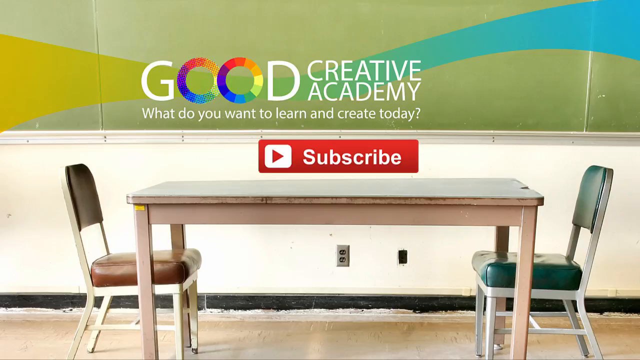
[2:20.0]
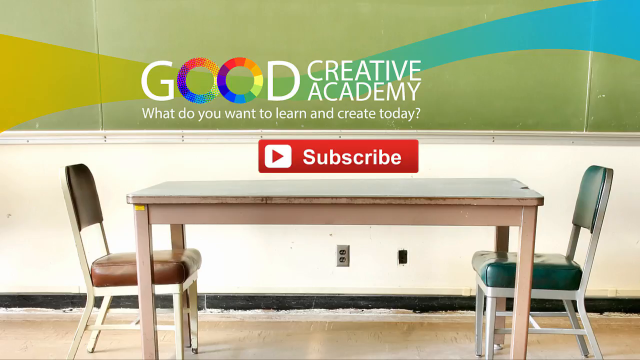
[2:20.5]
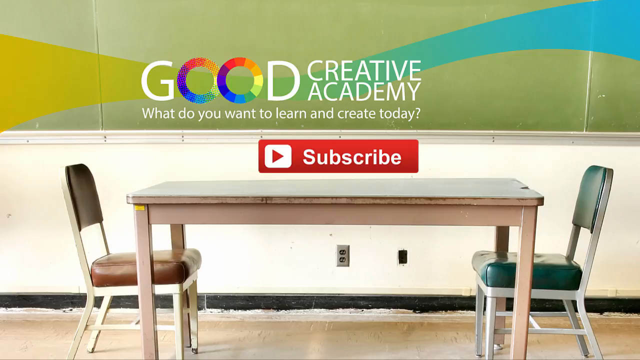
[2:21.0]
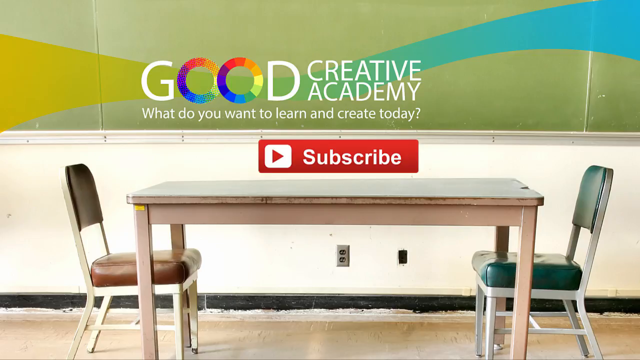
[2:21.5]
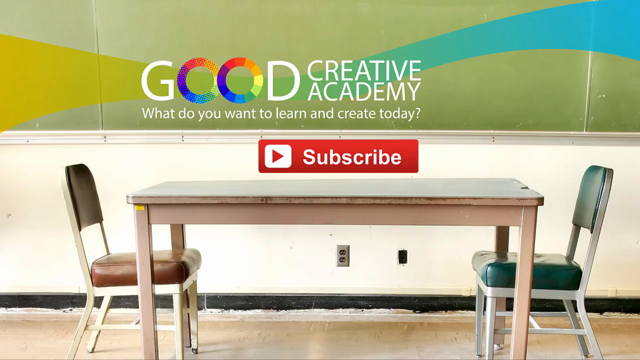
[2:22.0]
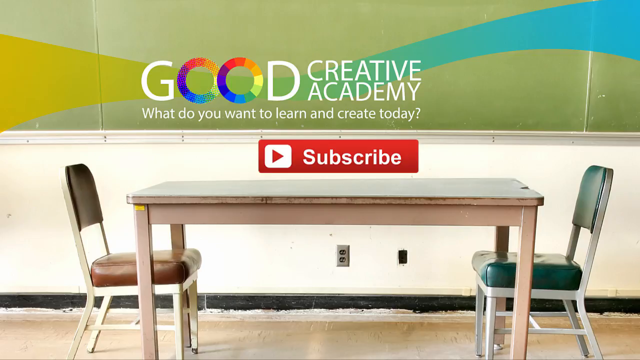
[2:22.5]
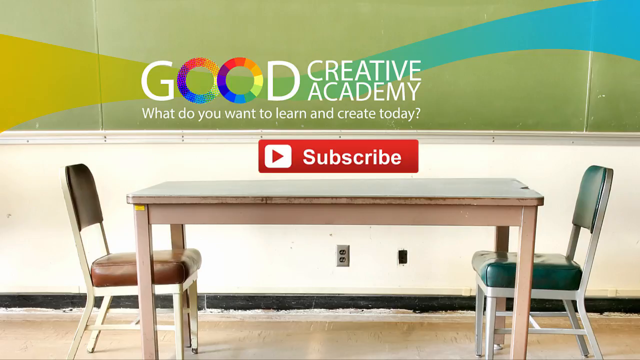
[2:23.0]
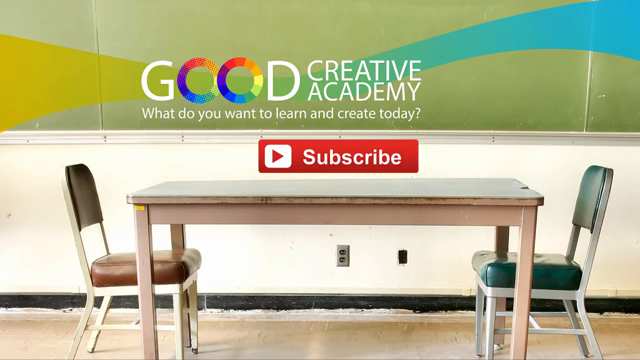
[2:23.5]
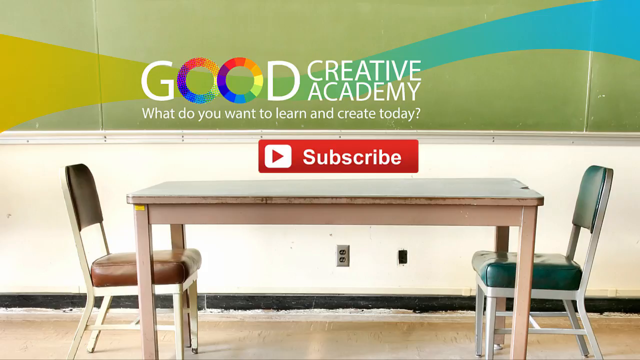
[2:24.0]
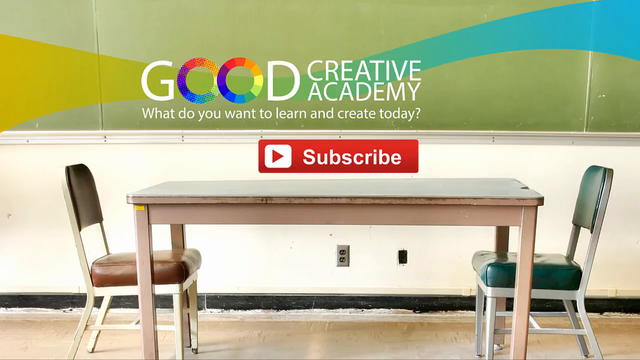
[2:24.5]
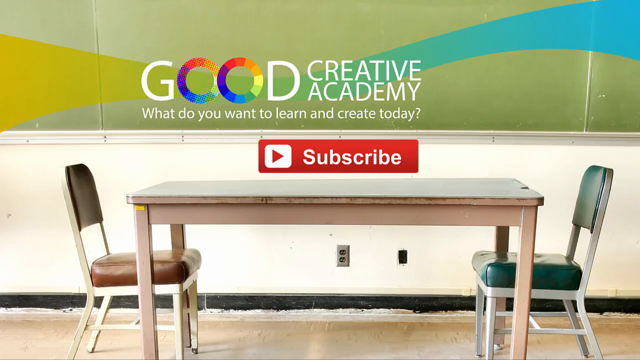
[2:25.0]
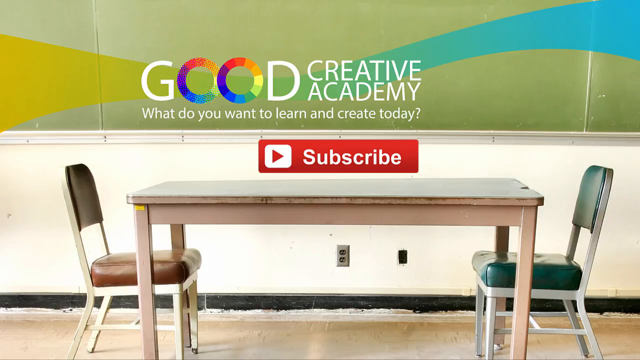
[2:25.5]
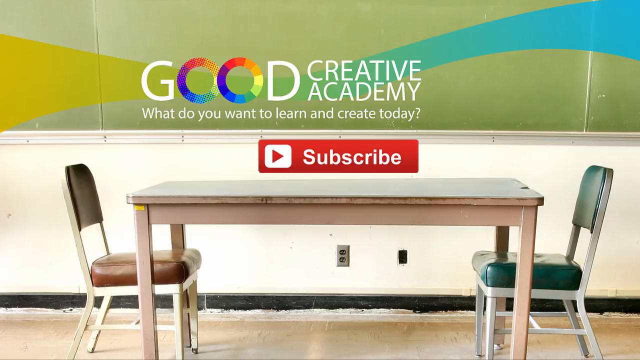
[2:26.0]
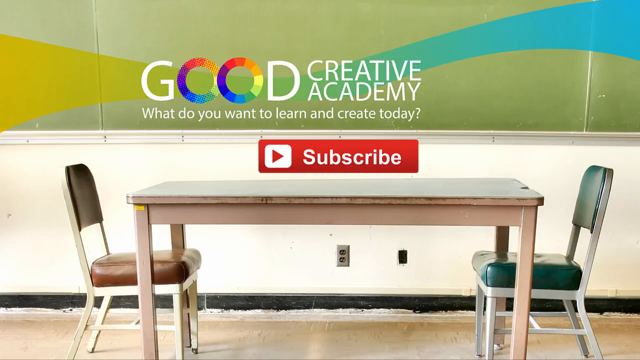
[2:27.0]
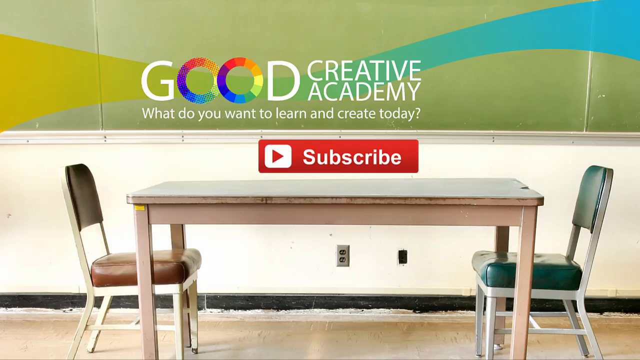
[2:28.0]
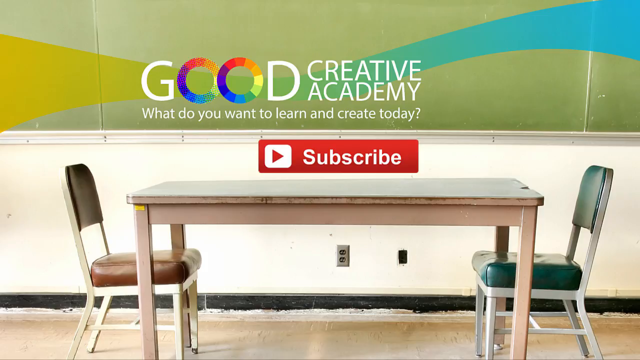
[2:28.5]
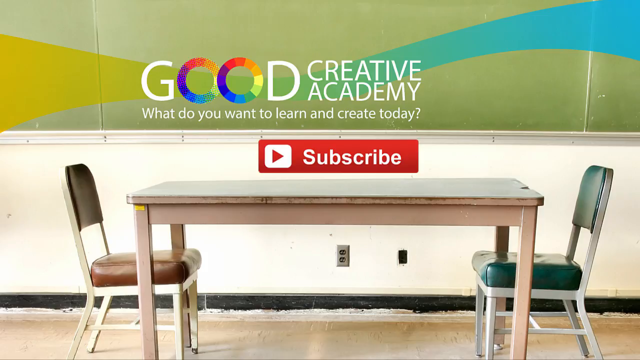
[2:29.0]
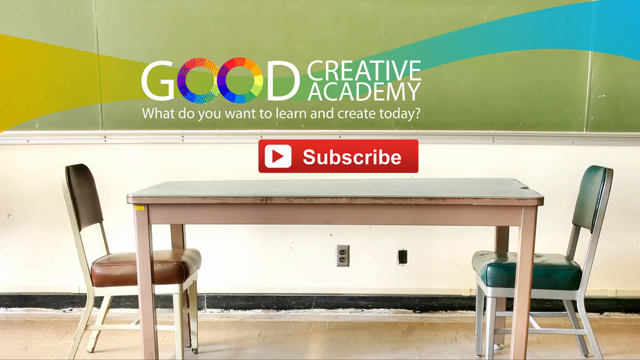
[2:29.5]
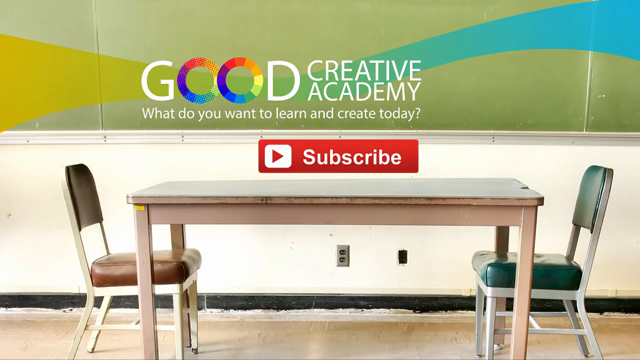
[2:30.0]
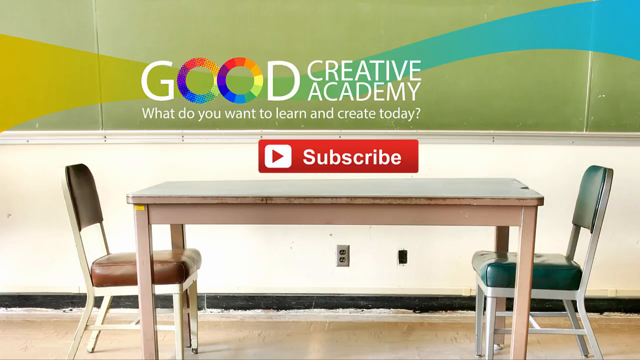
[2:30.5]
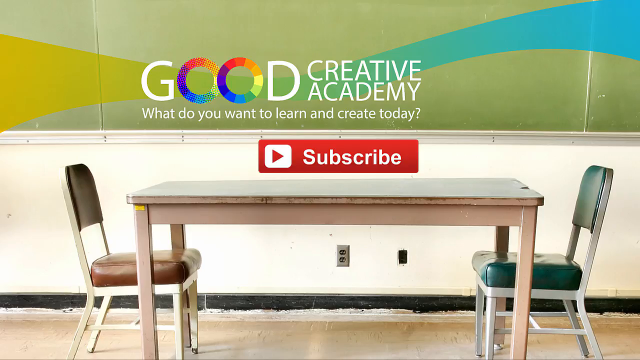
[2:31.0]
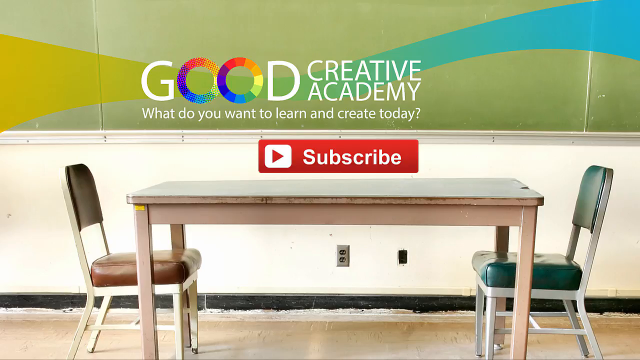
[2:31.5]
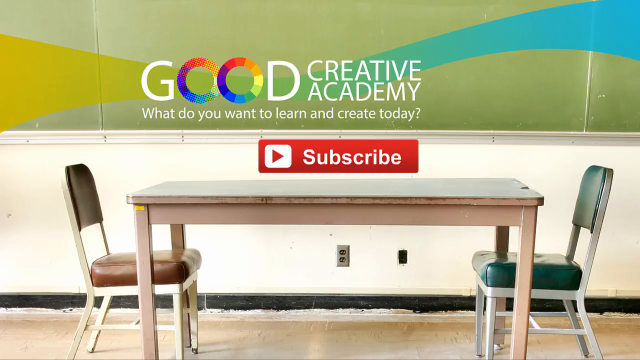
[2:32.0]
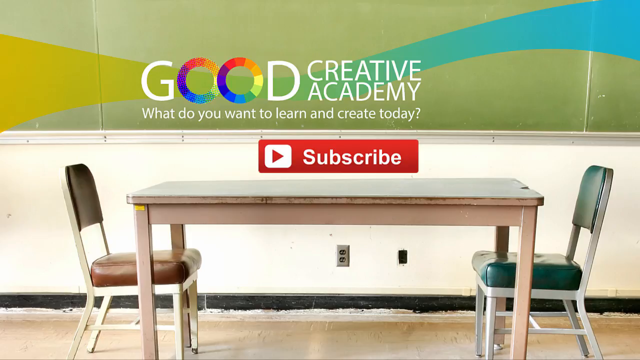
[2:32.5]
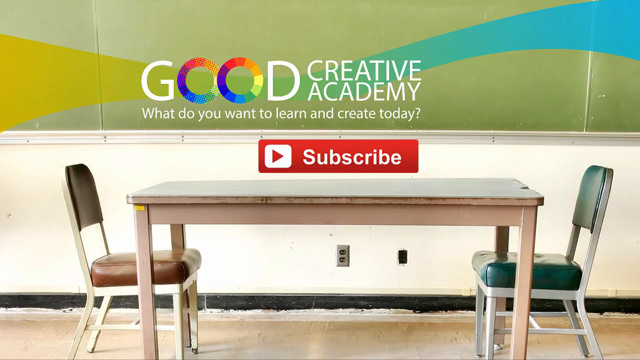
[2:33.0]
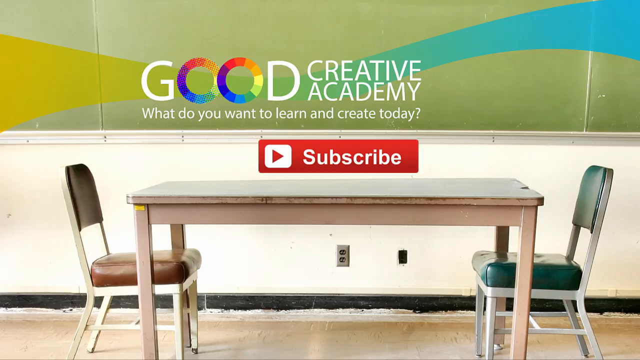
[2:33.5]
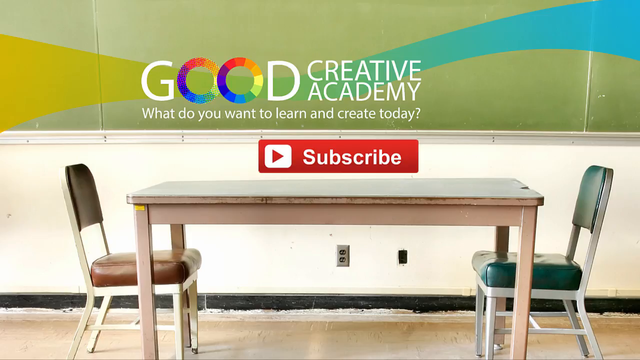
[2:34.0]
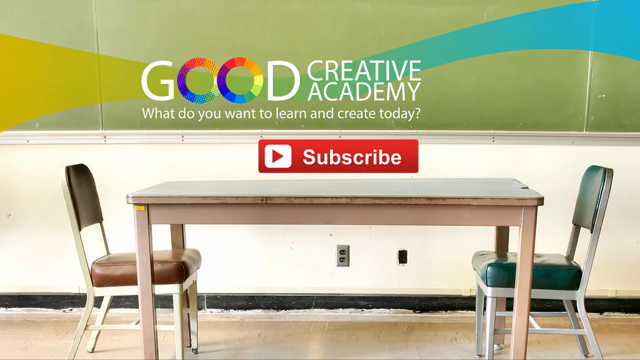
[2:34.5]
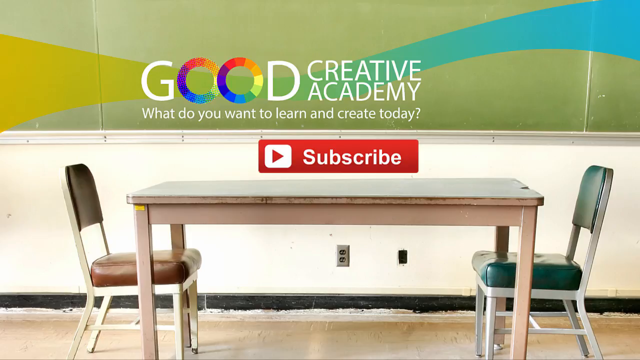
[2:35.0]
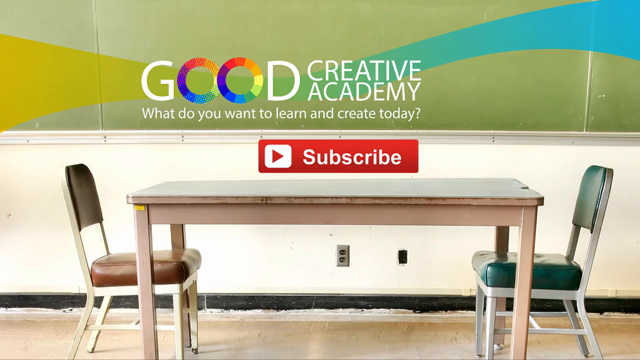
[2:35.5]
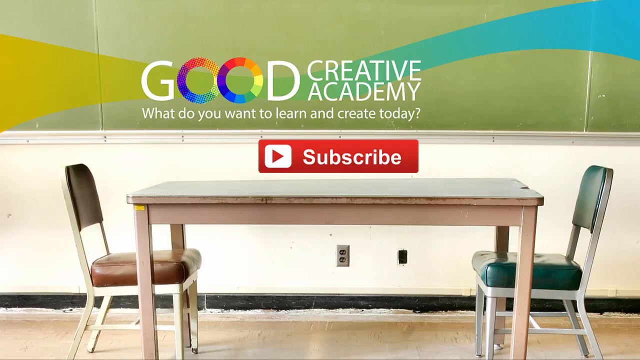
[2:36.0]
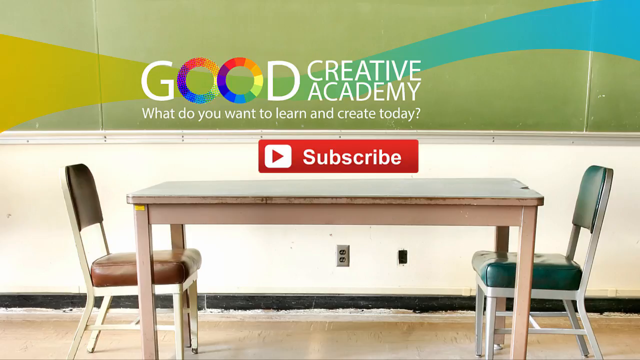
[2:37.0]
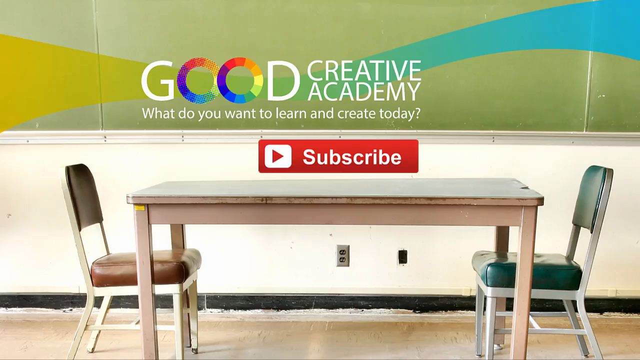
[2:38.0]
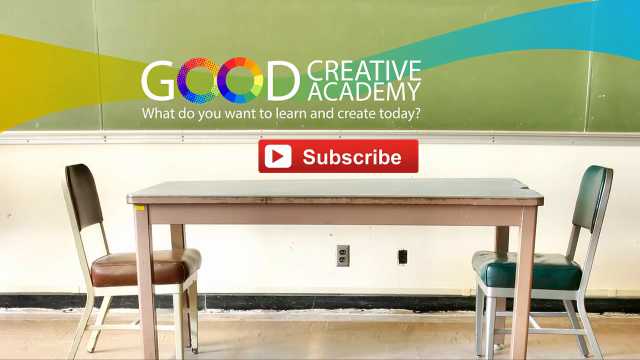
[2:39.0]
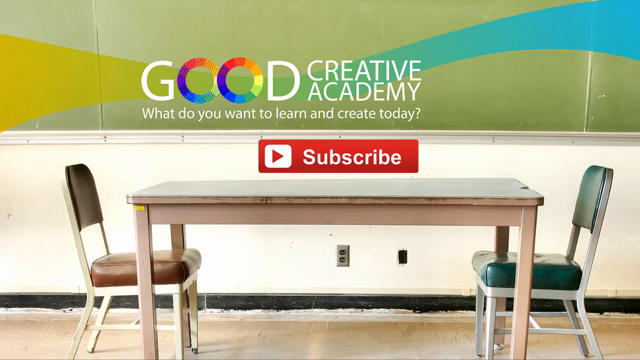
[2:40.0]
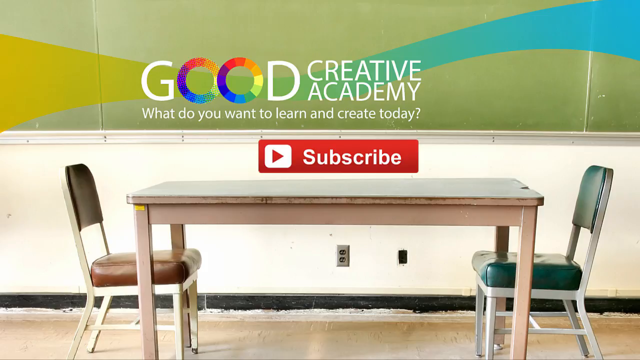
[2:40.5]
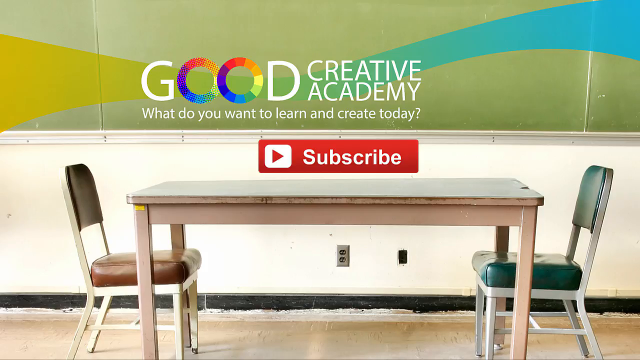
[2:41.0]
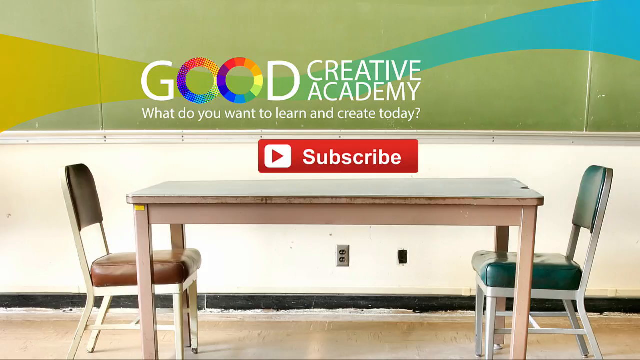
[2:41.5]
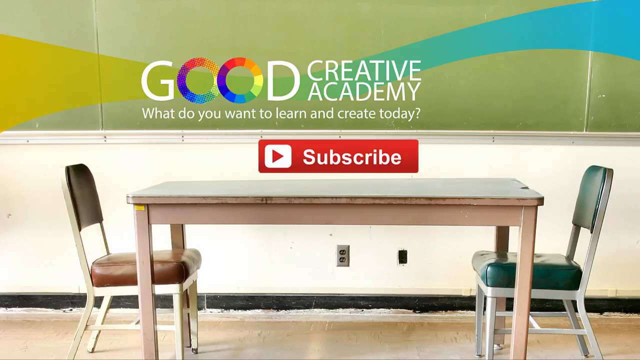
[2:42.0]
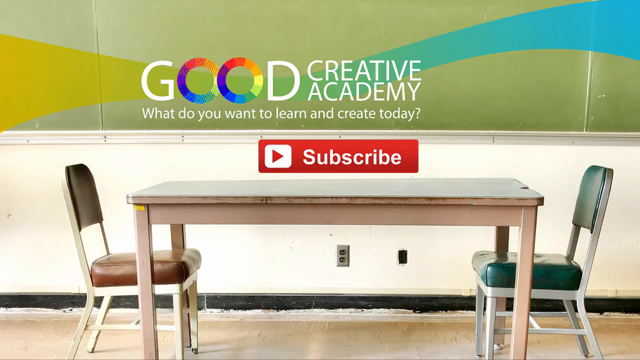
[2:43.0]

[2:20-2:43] A still shows the text "good creative academy. What do you want to learn and create today?" above a chalkboard. The text has a green olive color up to the G, then turns into blue toward the top right. The O's in the text are wheels of color. The chalkboard is visible behind it. Below the chalkboard the wall is in poor condition, with an outlet and, to its right, a hole where another outlet used to be. The table in the middle is in poor condition, an odd beige color, and looks like it has very crooked legs. Around the table are two chairs matching in style but completely different in color: the one on the right has a white base in great condition with green seat and cushions, while the one on the left has brown cushions, a back cushion that almost looks black, and slightly bent, dirty legs.